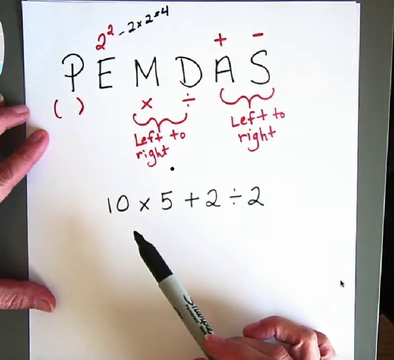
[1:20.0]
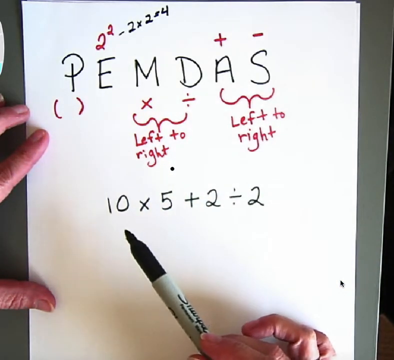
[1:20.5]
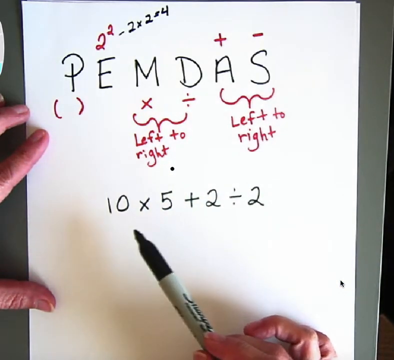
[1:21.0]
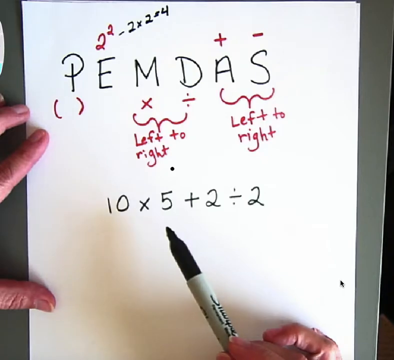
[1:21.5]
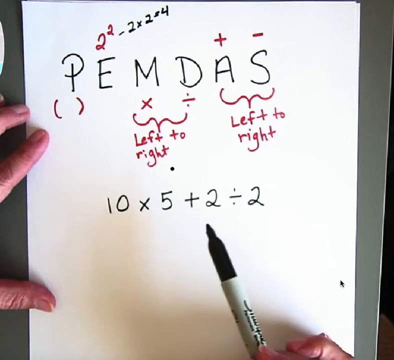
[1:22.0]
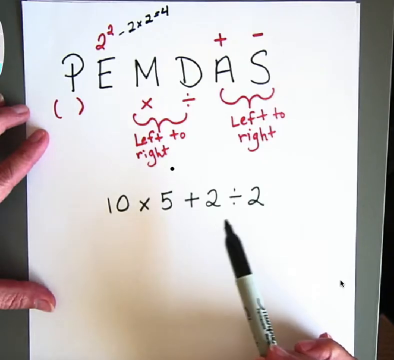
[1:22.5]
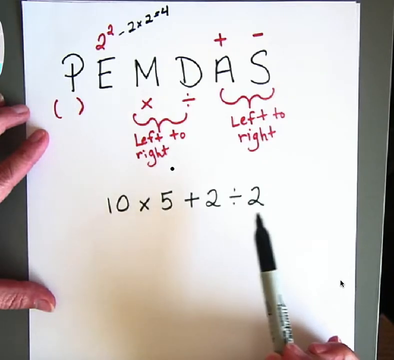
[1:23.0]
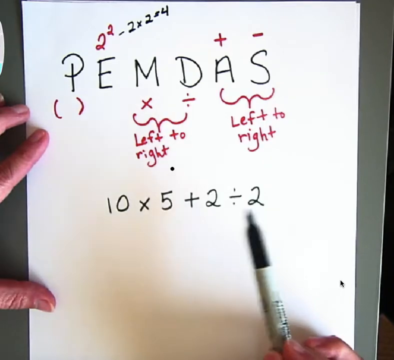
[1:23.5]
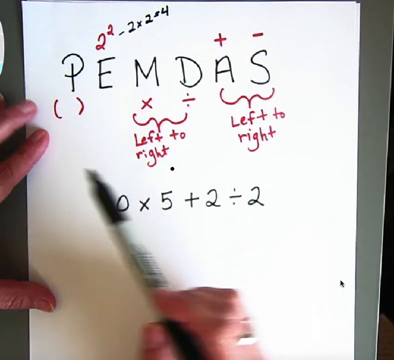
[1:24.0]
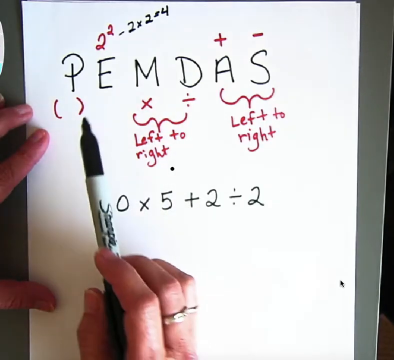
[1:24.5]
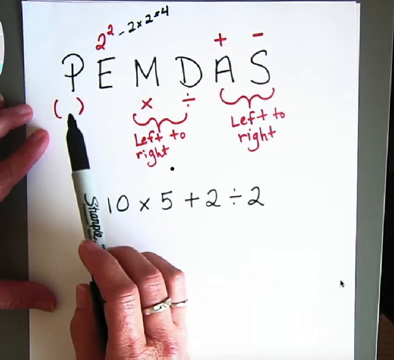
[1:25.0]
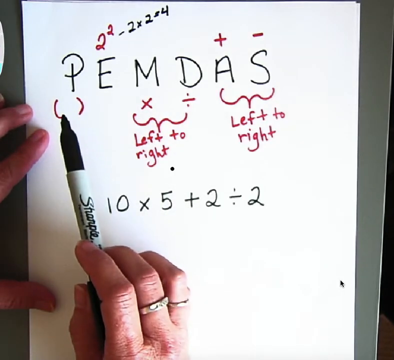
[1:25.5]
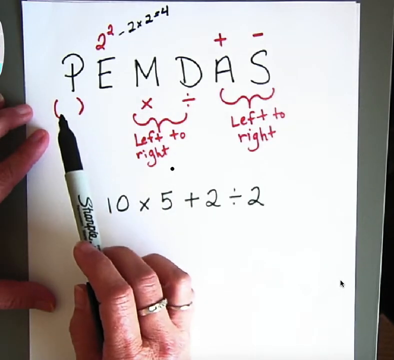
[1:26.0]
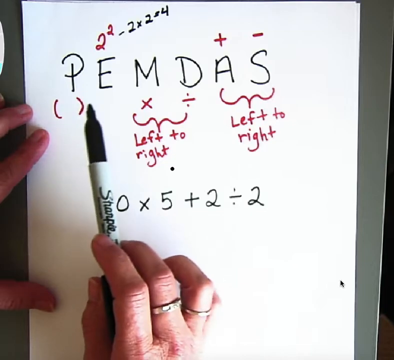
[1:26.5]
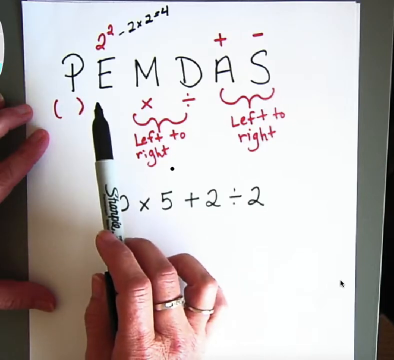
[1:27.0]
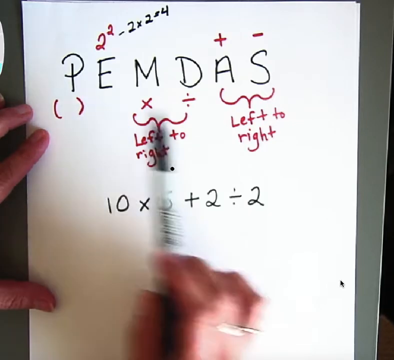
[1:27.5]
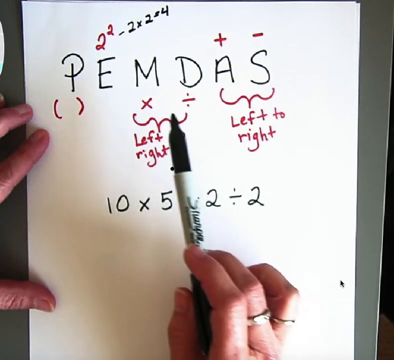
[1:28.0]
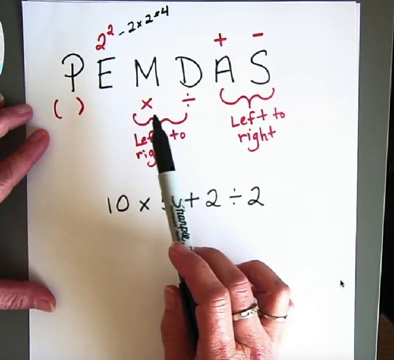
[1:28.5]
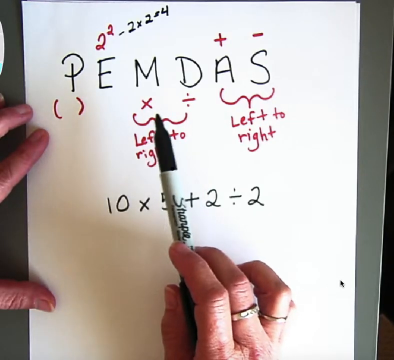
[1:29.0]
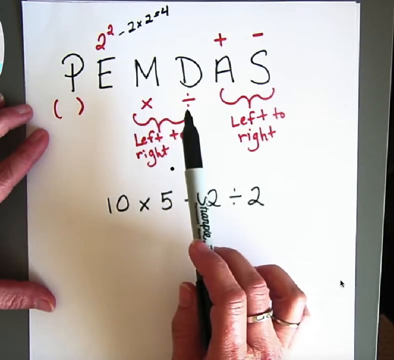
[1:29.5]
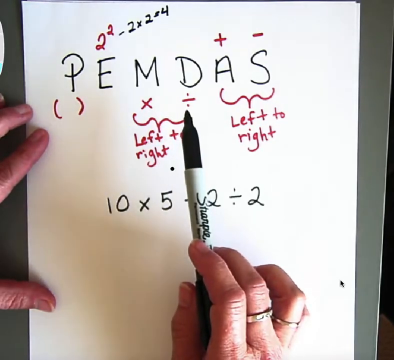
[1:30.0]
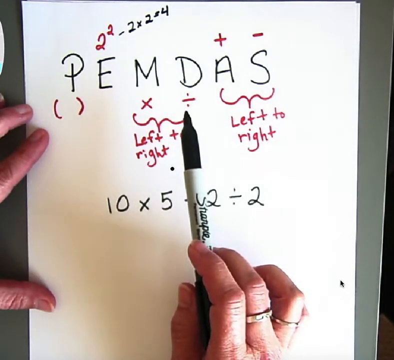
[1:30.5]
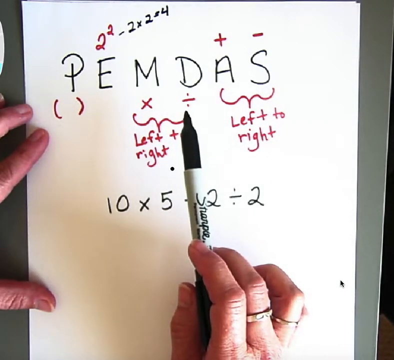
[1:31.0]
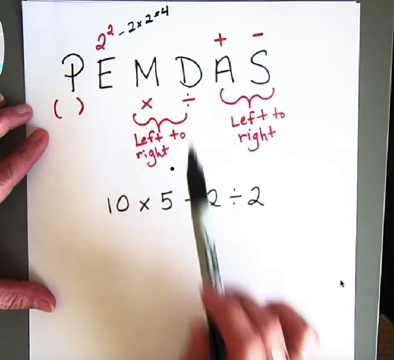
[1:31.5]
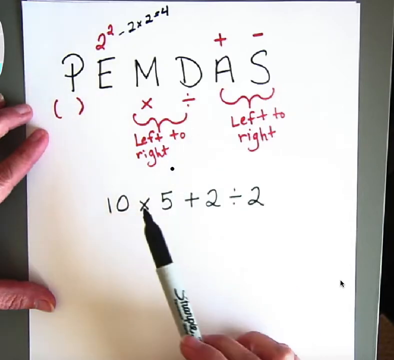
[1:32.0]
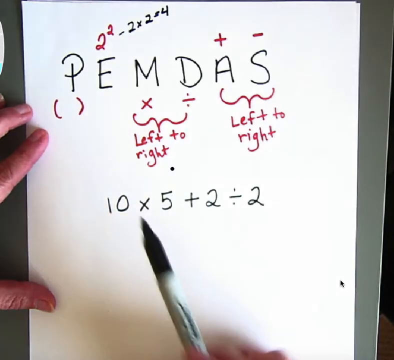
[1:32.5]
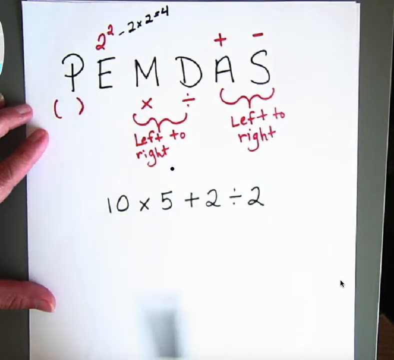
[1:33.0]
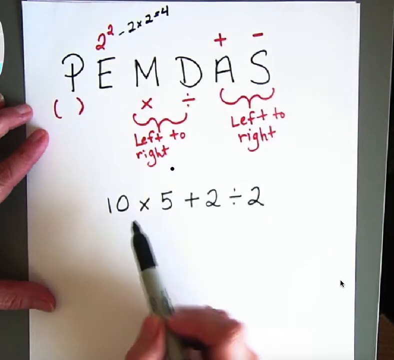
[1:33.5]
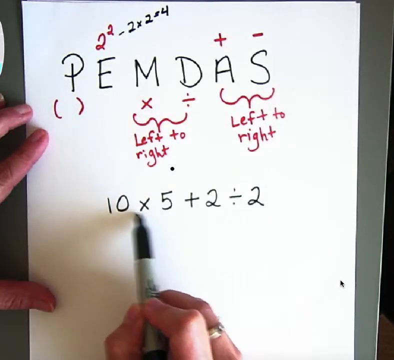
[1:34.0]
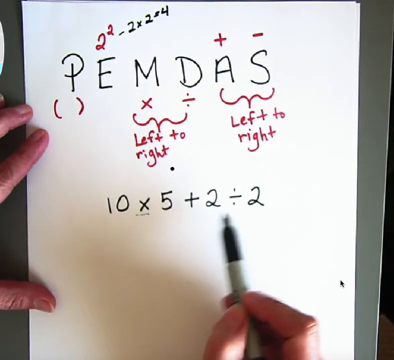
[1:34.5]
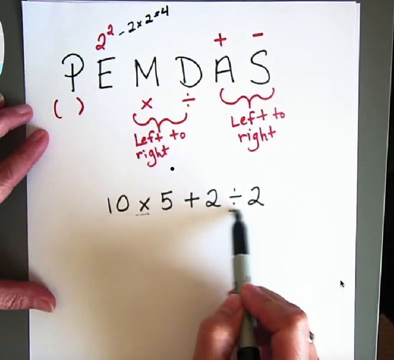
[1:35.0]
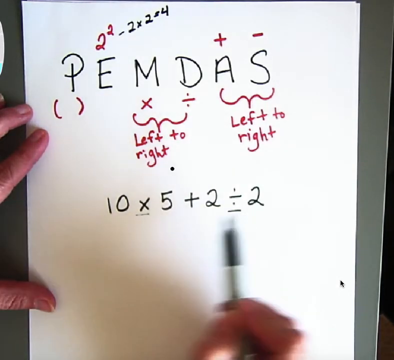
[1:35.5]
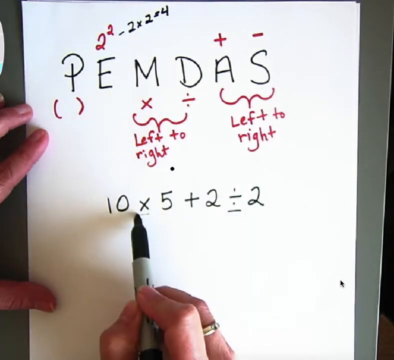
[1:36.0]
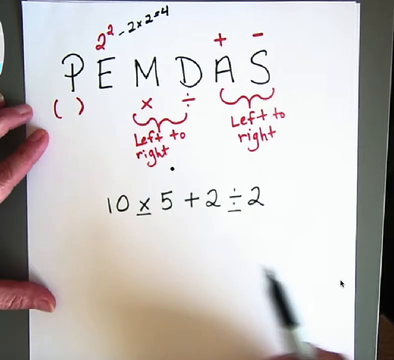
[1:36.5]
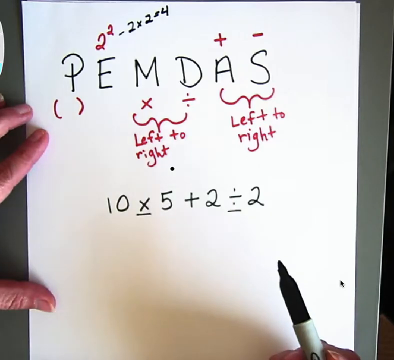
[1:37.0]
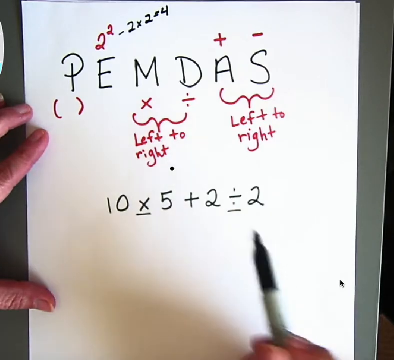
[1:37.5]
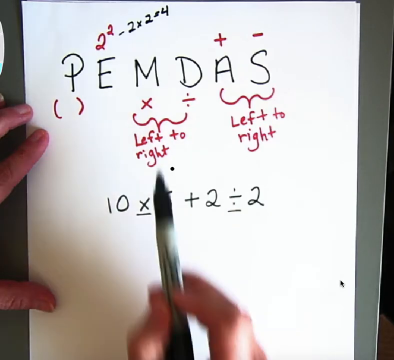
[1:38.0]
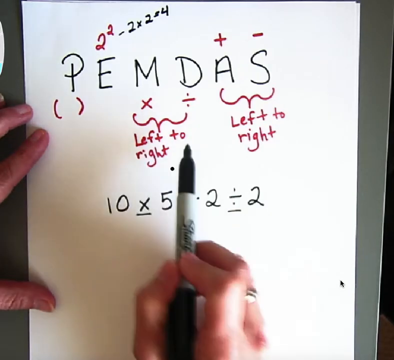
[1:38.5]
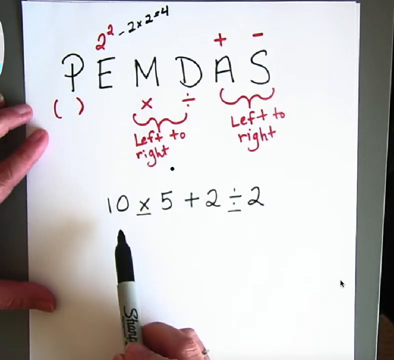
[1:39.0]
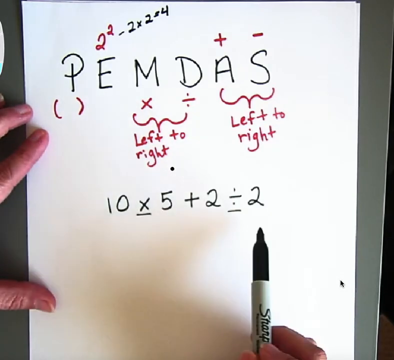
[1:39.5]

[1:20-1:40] A white piece of paper has "PEMDAS" across the top, all in capital letters spaced apart from each other. The person holds the paper down with their left hand. Above the E is a formula, with minus 2 times 2 equals 4 written in black. There is a plus sign over the A and a minus sign over the S. Under the P is a red parentheses, under the M an X, and under the D a division sign. A squiggly sign under the A leads to the statement "left to right", and a squiggly sign under the M and D leads to the statement "left to right". At the bottom is a math problem, 10 times 5 plus 2 divided by 2. The person holding the marker points to the equation at the bottom, then to the red parentheses under the P, the E, the X under the M, and the division sign under the D. They then point back to the equation, underlining the multiplication sign in the 10 times 5 part and the division sign in the 2 divided by 2 part.